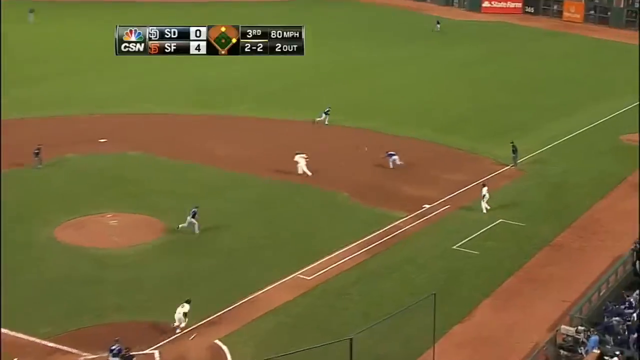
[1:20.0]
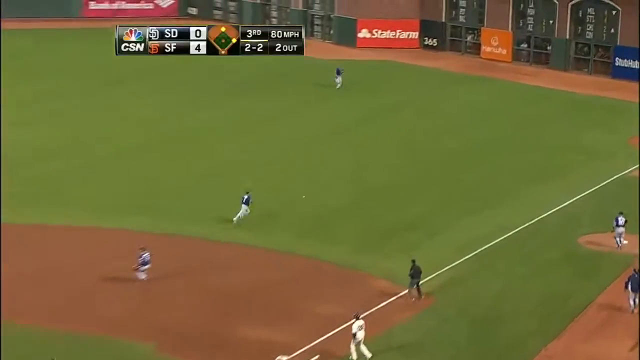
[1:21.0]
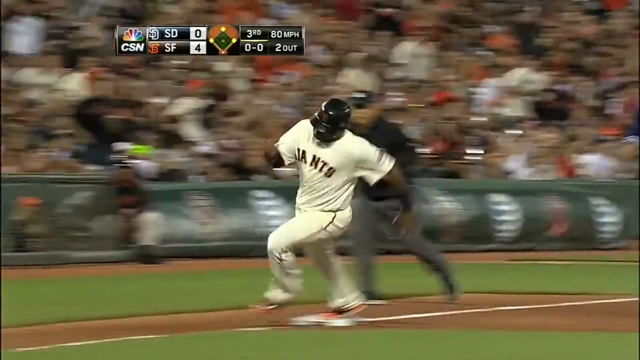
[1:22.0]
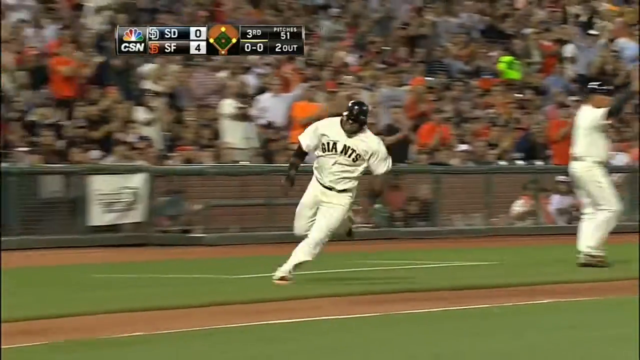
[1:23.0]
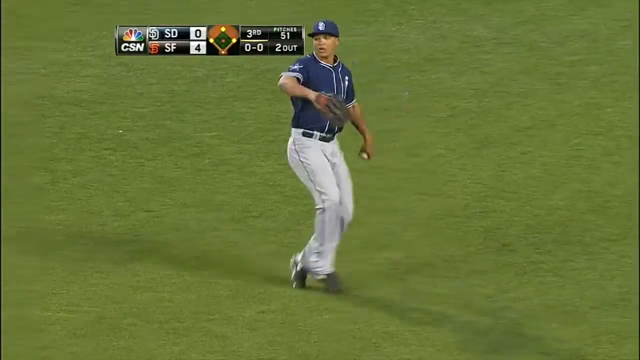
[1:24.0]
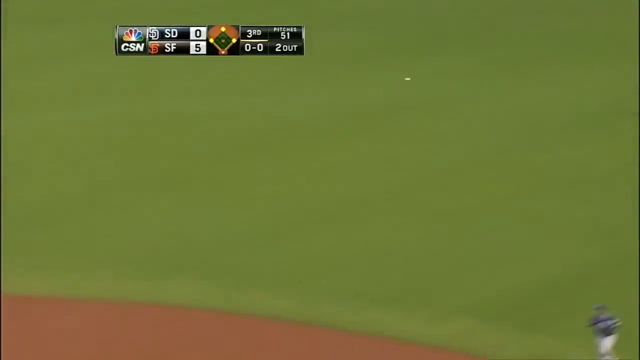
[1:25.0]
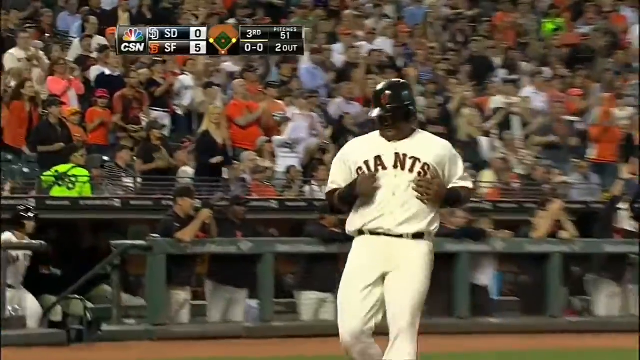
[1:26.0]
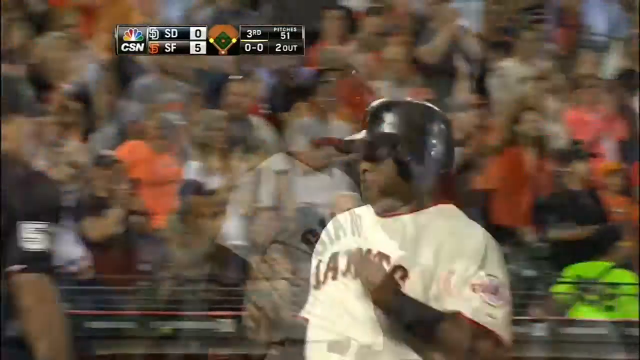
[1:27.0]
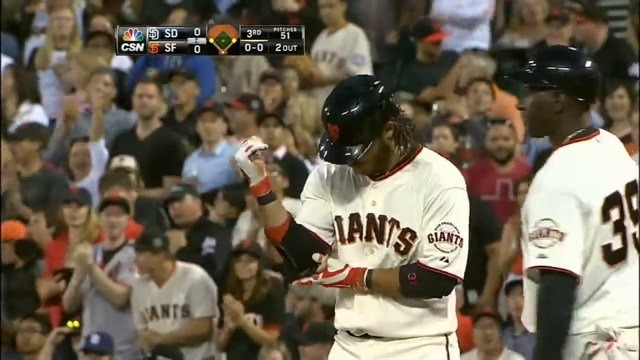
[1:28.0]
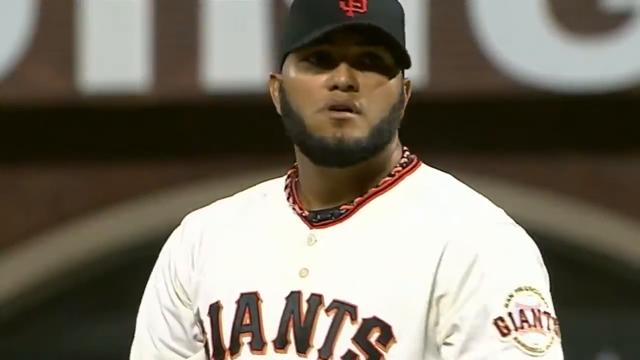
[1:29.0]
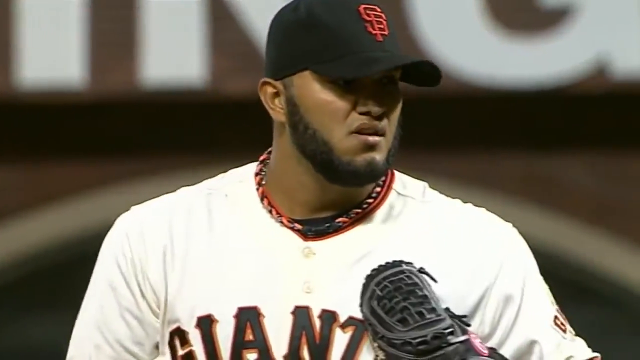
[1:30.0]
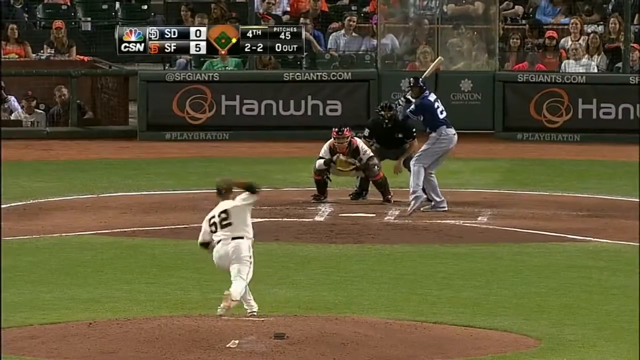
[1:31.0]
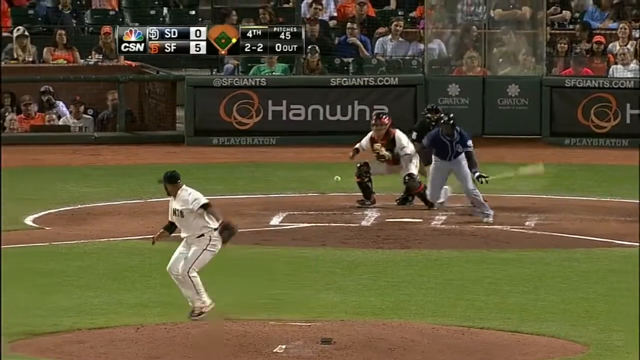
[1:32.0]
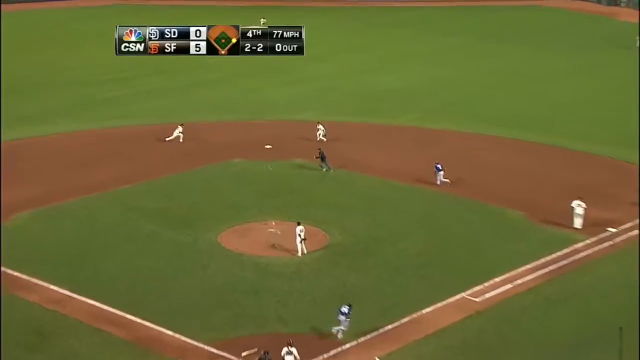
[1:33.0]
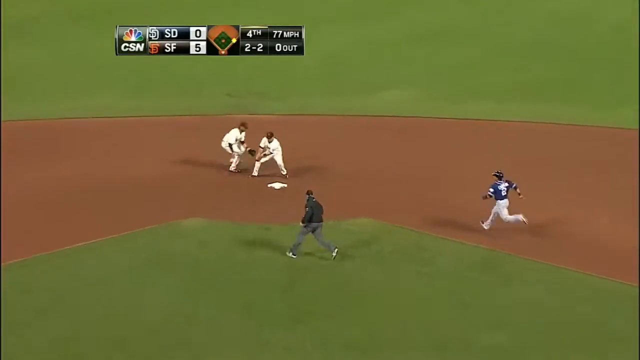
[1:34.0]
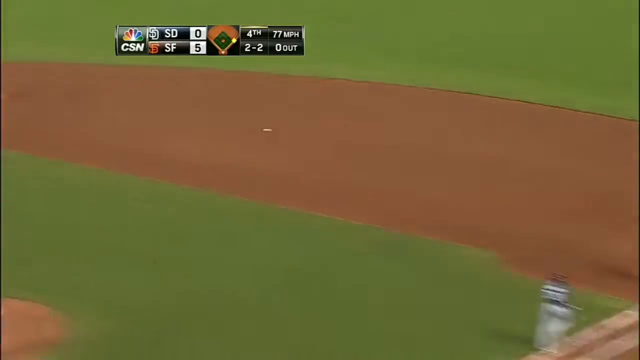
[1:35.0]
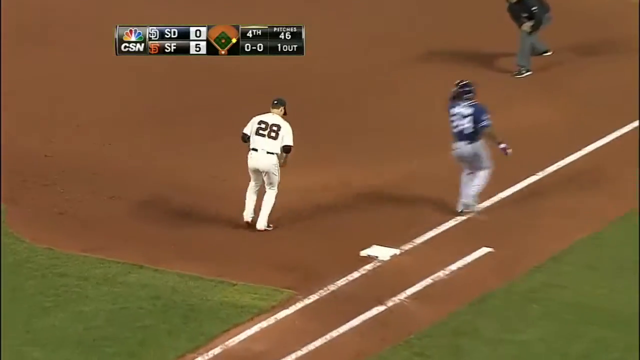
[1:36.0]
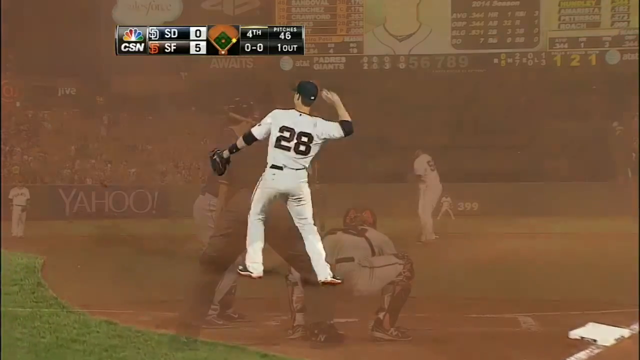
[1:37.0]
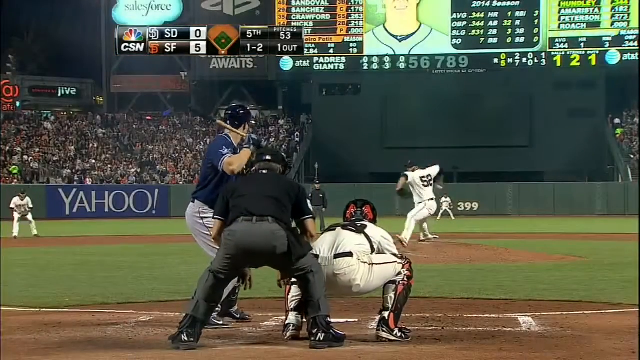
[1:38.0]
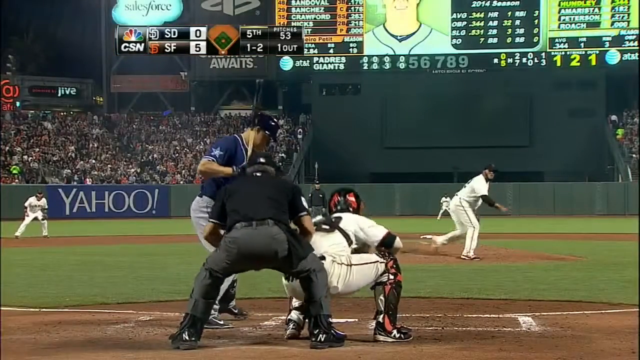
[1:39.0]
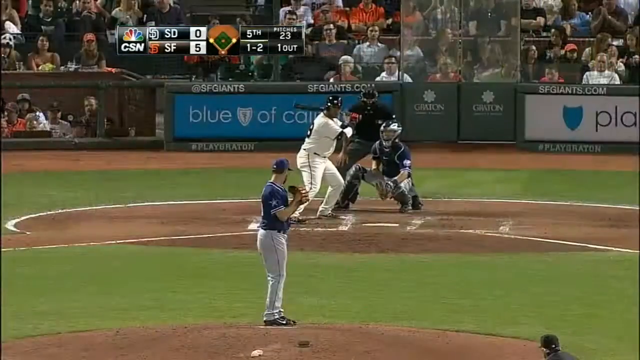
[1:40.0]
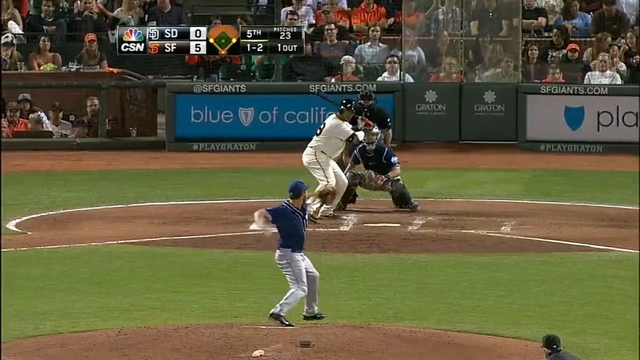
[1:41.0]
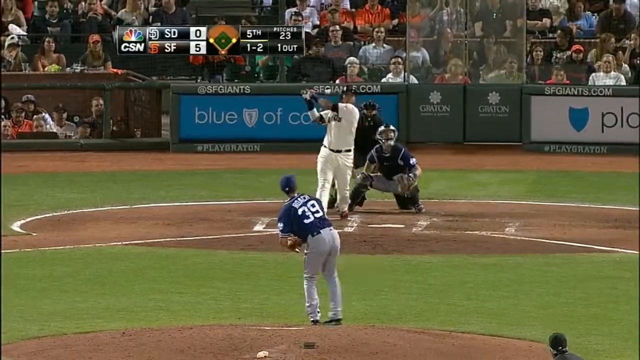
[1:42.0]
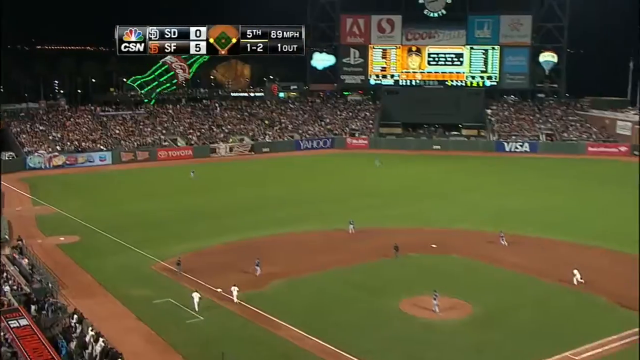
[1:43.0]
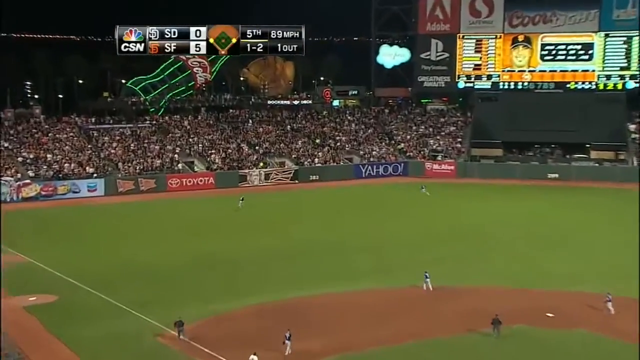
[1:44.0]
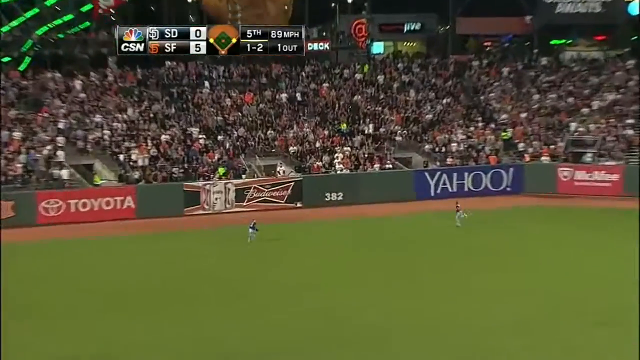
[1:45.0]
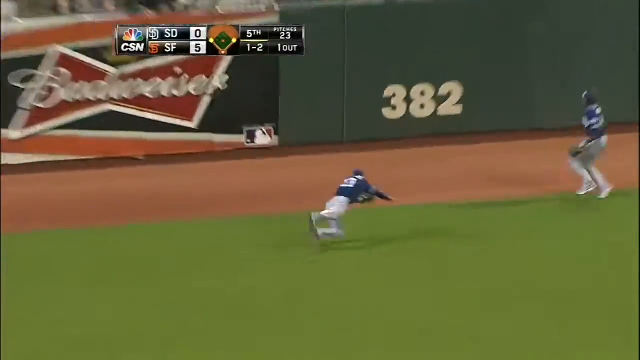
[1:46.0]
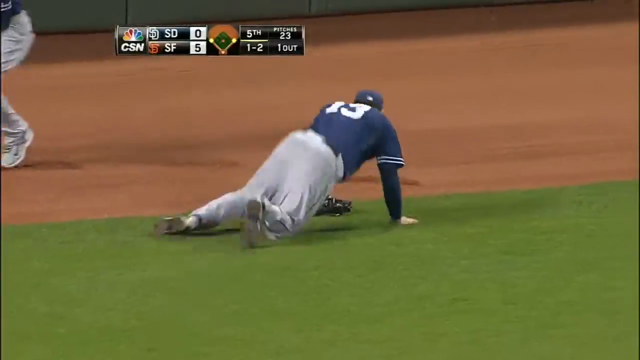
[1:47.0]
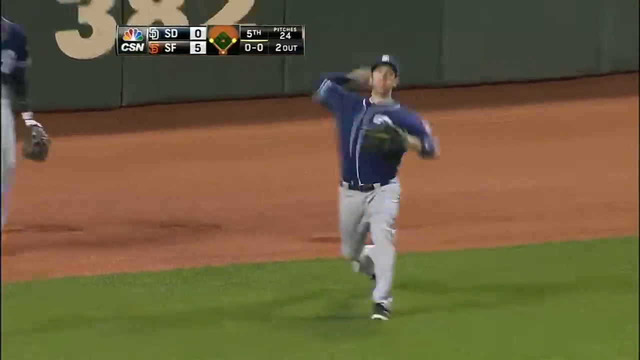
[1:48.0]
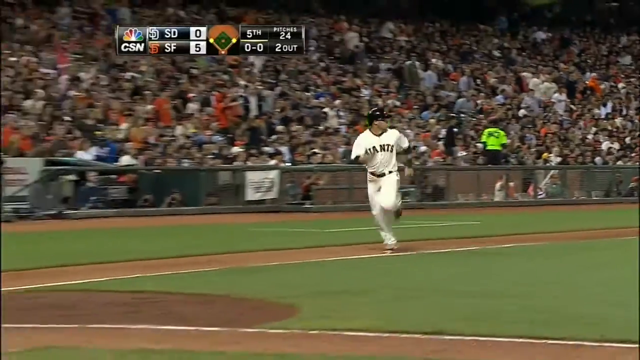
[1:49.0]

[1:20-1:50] In the bottom of the third inning, with the score San Diego 0, San Francisco 4, two outs, two men on, and a two-ball, two-strike count, the left-handed pitcher throws to the left-handed batter, who hits a single right between the shortstop and the first baseman, making the score 5-0 San Francisco. The game moves to the top of the fourth: two balls, two strikes, 5-0 San Francisco, one man on, zero outs. The right-handed pitcher pitches to the right-handed batter, who hits it up the middle; the ball is caught and he is thrown out at first.